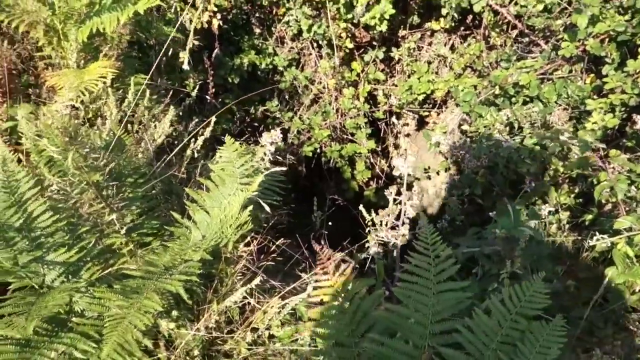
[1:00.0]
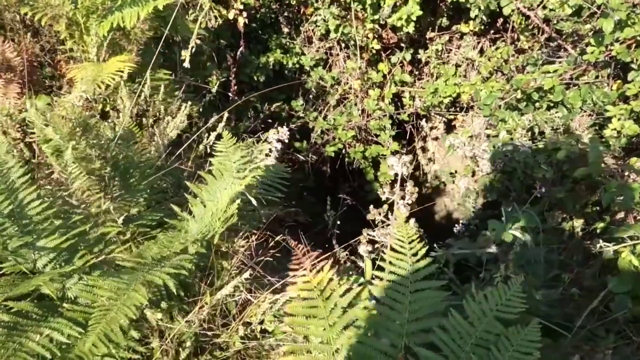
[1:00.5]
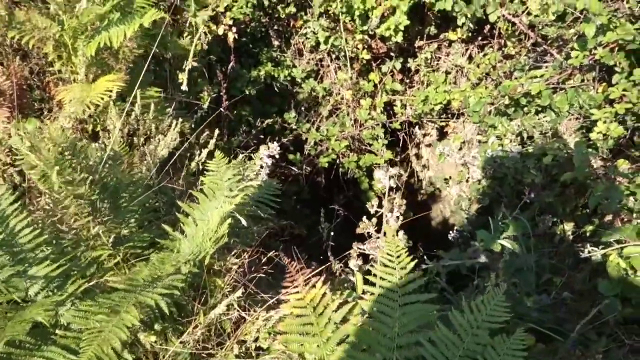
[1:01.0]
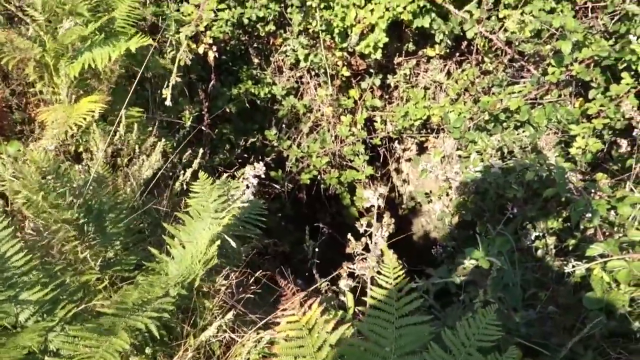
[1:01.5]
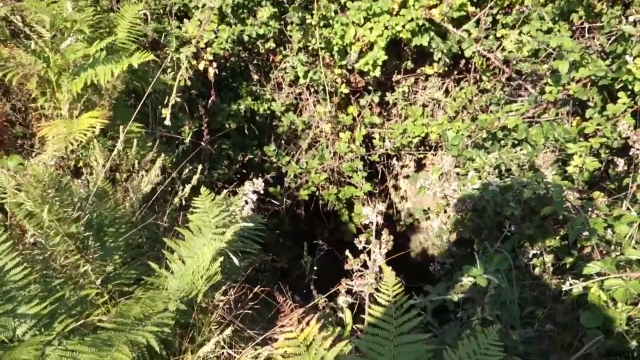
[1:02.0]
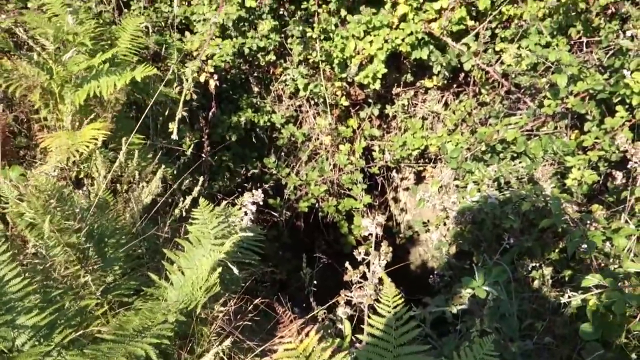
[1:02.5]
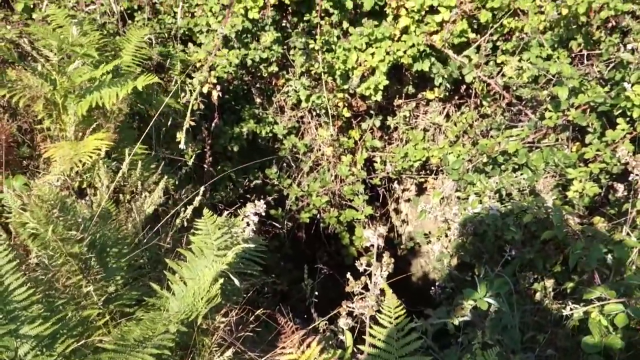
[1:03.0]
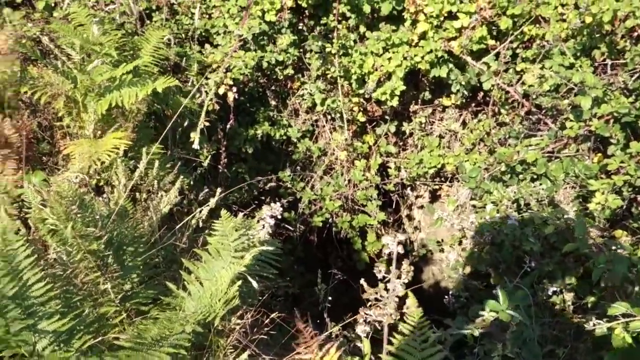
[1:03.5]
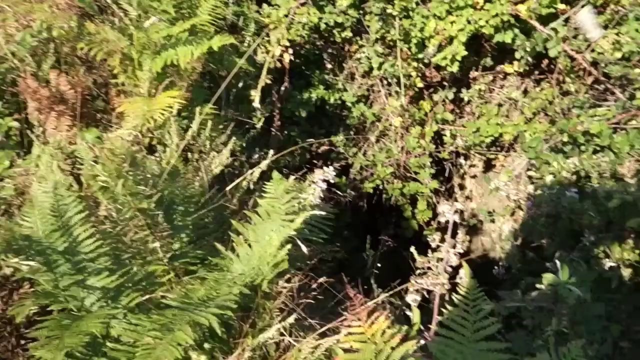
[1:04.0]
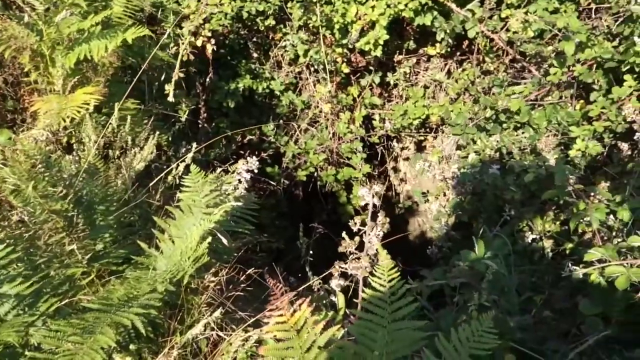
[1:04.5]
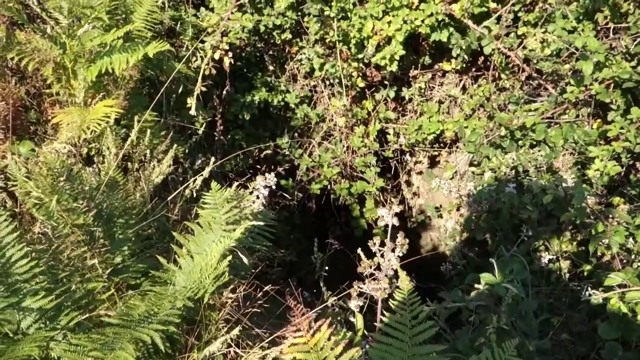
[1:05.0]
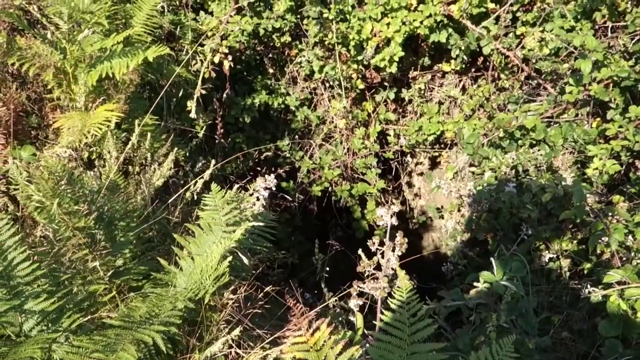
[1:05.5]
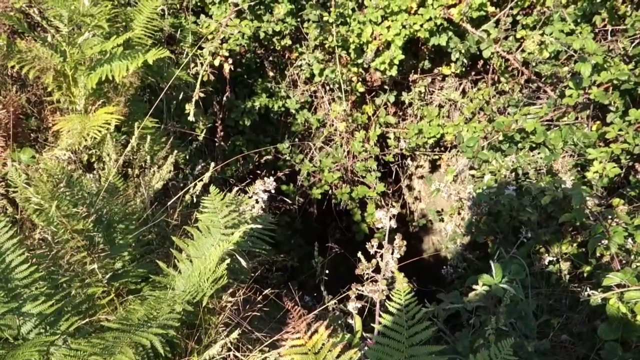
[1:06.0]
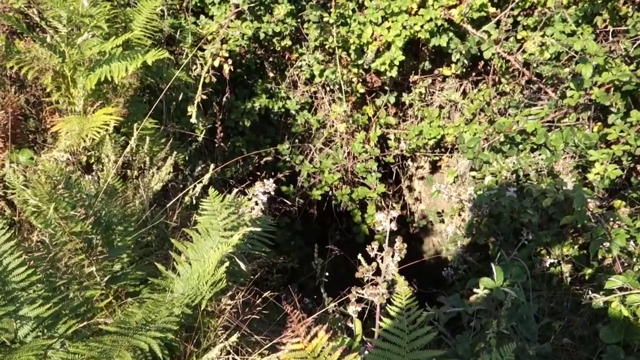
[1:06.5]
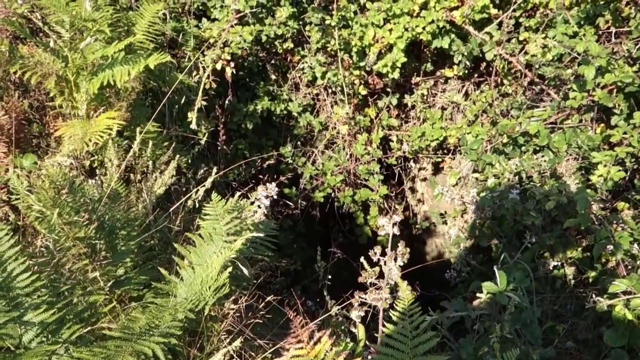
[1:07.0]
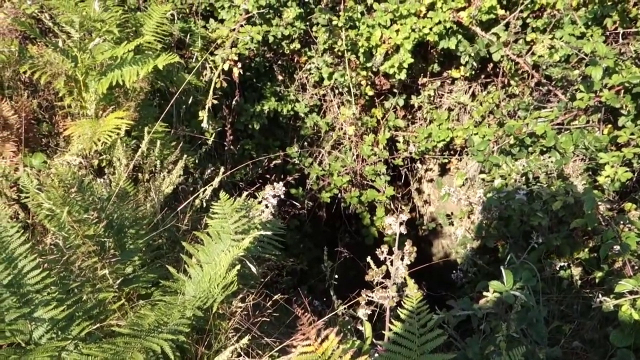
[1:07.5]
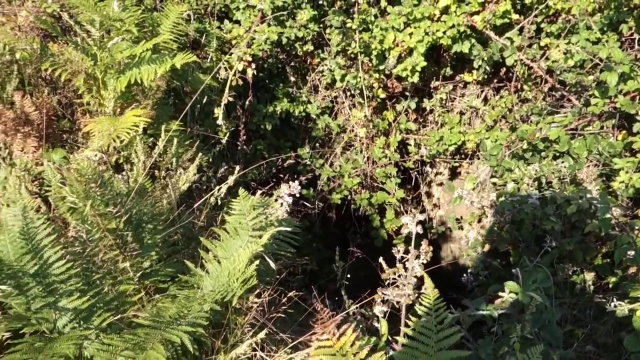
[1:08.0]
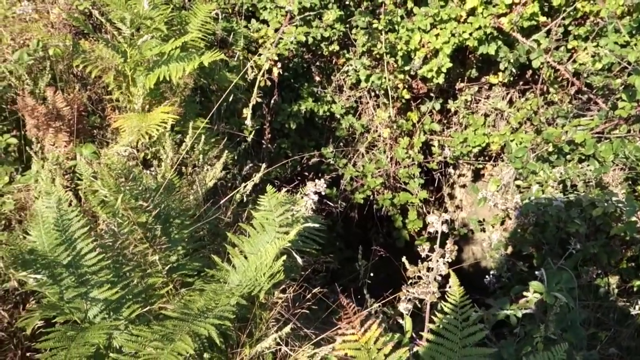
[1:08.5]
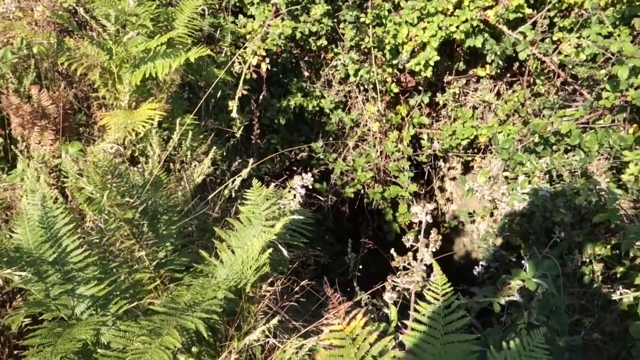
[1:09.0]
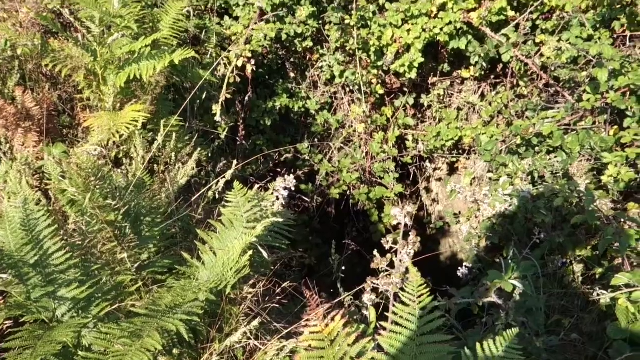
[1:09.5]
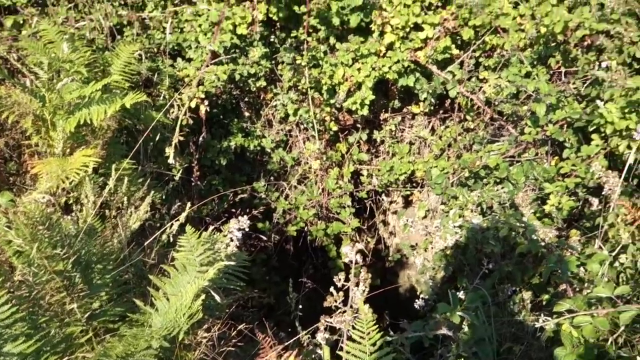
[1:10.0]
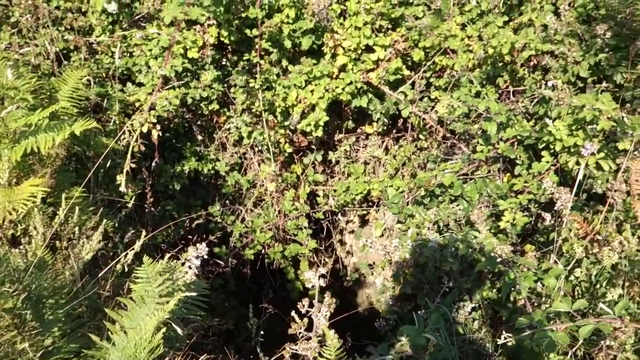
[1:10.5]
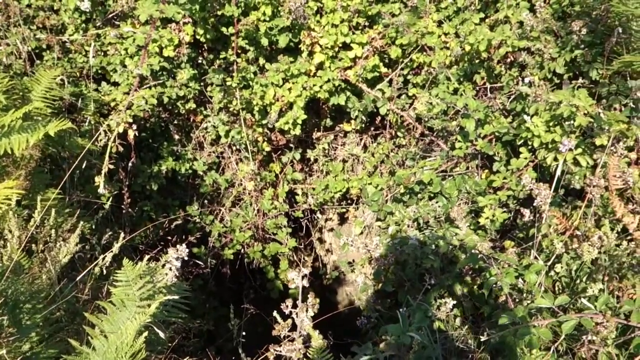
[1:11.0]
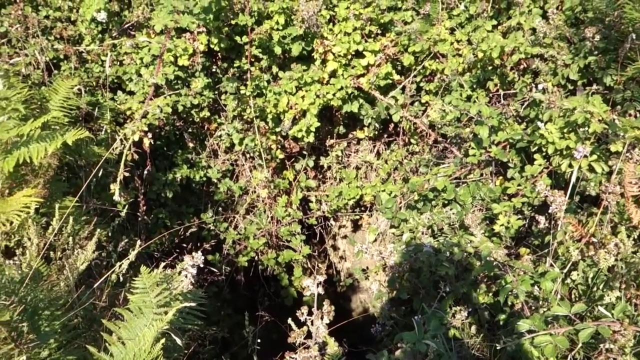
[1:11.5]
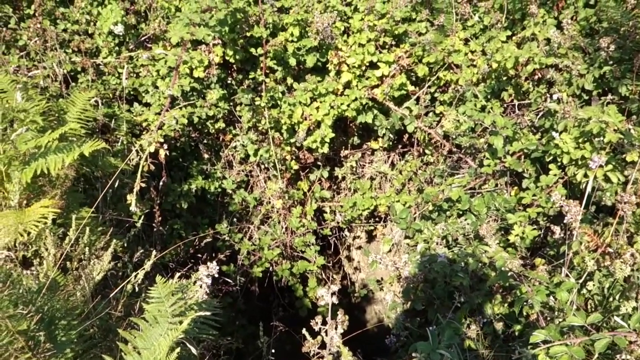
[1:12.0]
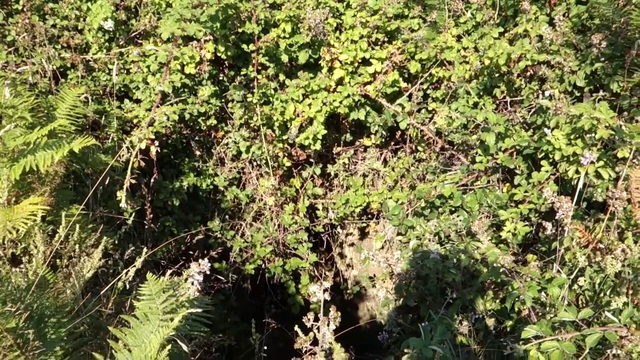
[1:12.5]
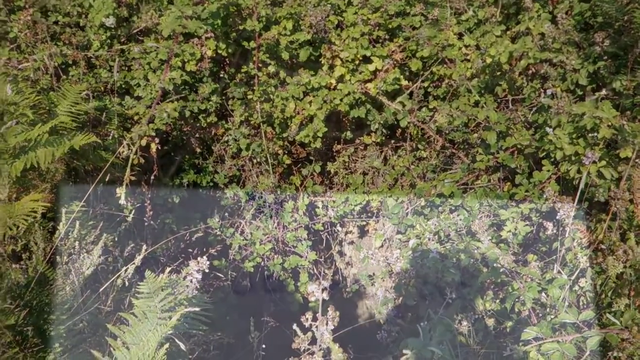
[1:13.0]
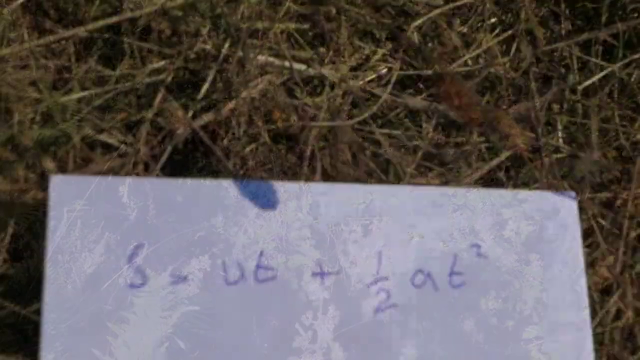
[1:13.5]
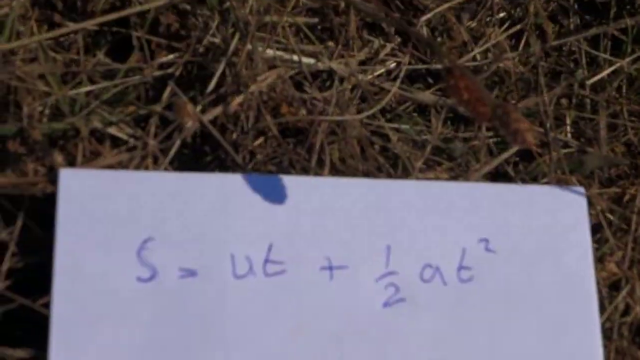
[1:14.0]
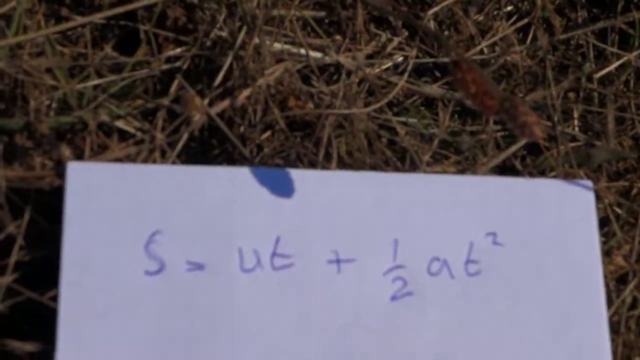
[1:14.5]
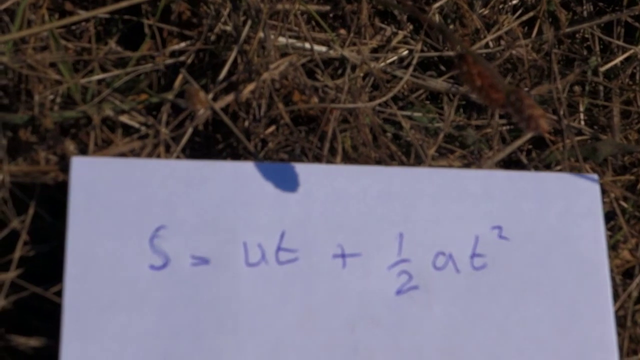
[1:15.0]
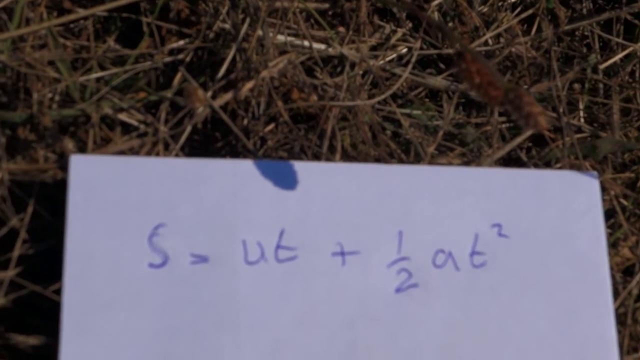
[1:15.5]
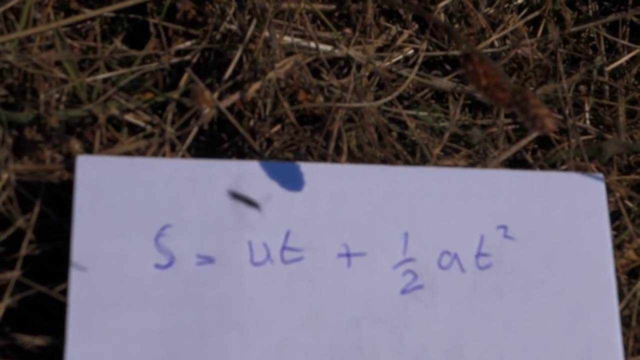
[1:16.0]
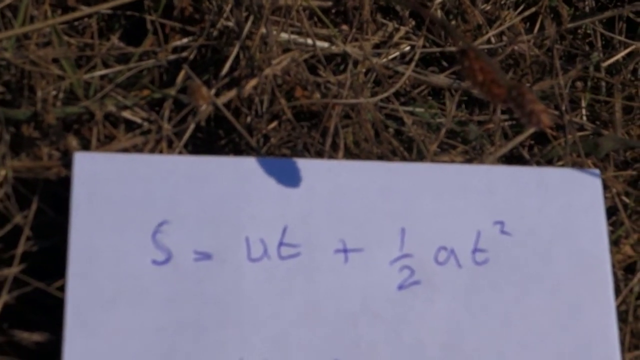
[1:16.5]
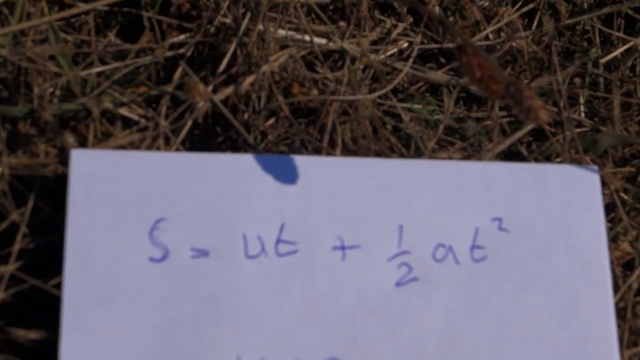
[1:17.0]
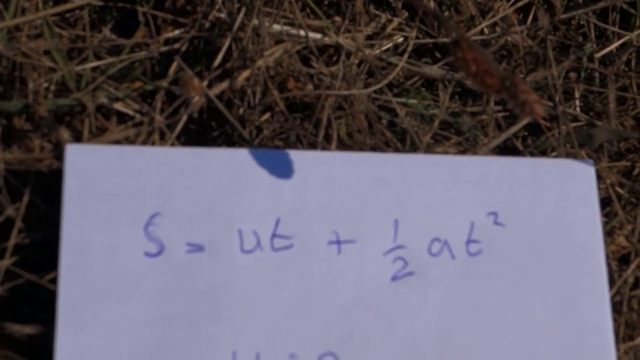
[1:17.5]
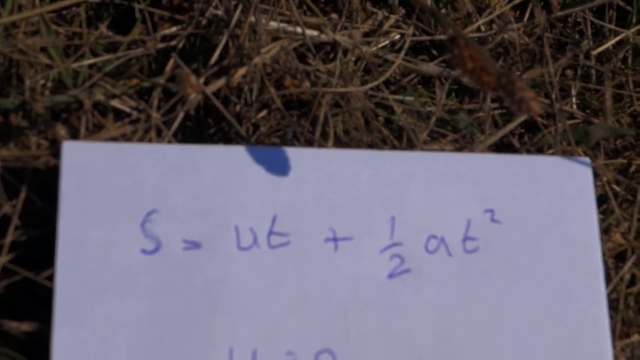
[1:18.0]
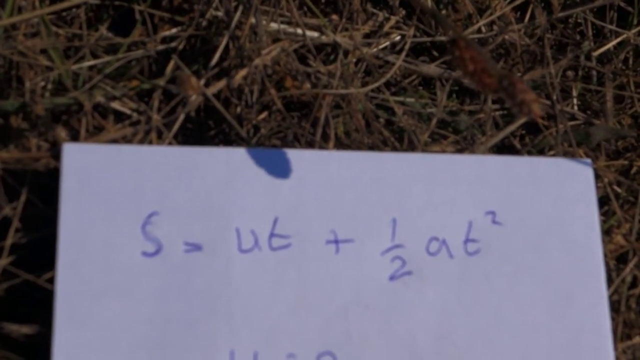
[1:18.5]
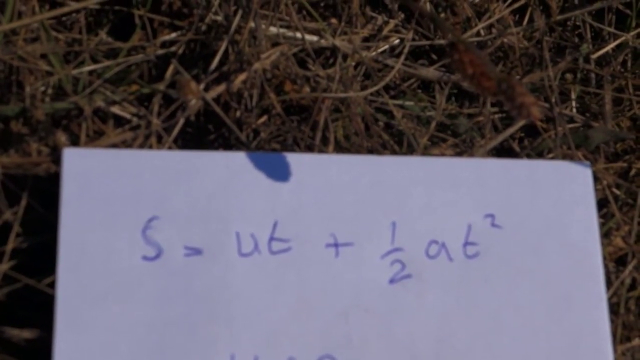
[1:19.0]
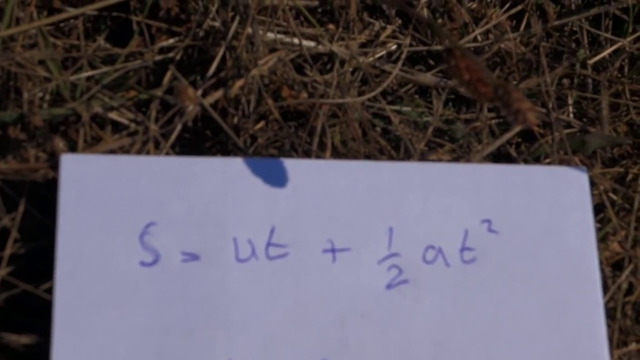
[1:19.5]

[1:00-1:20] The camera shoots a hole in the ground from top to bottom, while the shadow of a person moves in the lower right corner of the frame. The vegetation is lush, with a lot of green. The person moves the camera while filming the hole. In the next shot, a white sheet of paper lies on dry yellow grass. The sheet has mathematical formulas with letters and numbers in blue, seemingly written with a pen, and occupies the lower half of the frame. In the upper, almost central part of the sheet is the shadow of an object. The video quality, especially in this last shot, is poor.